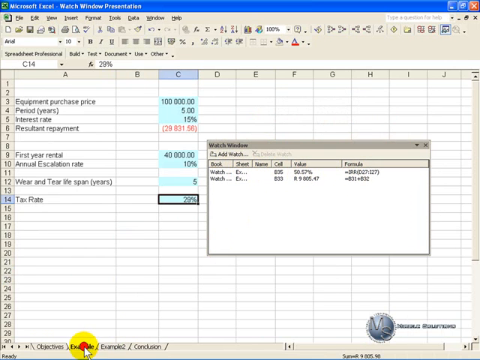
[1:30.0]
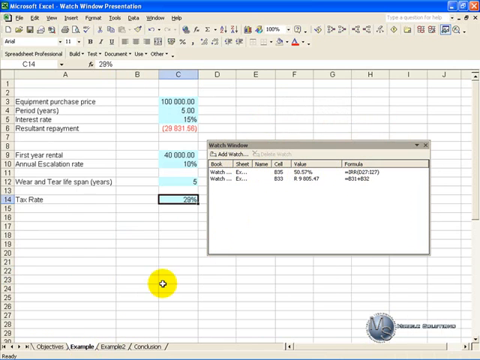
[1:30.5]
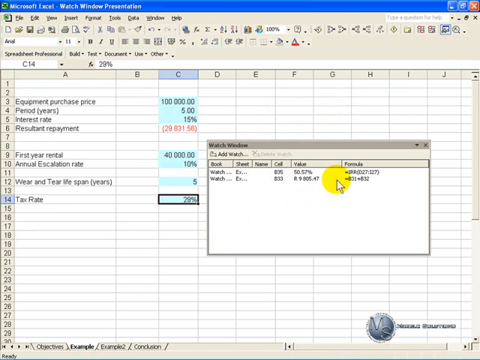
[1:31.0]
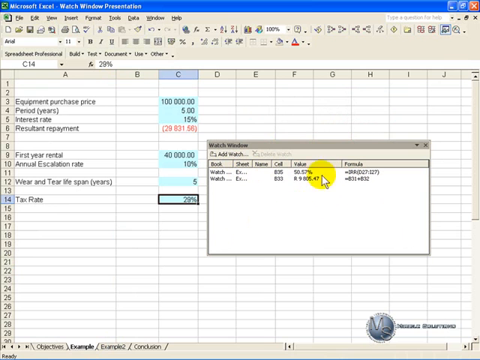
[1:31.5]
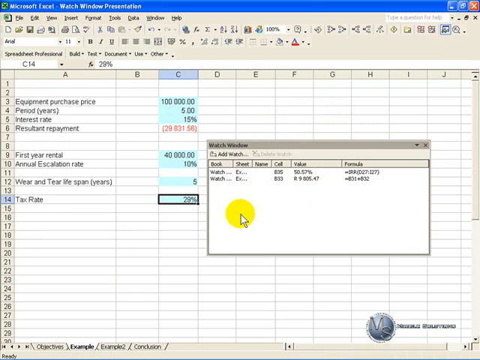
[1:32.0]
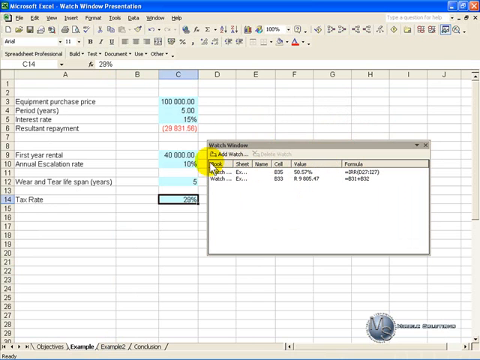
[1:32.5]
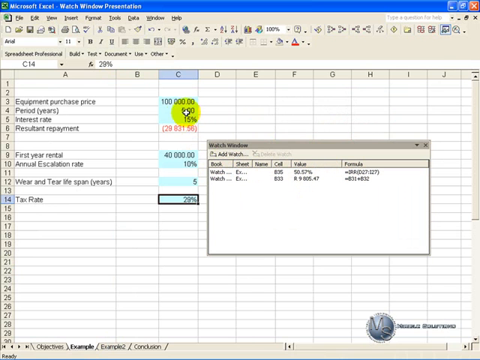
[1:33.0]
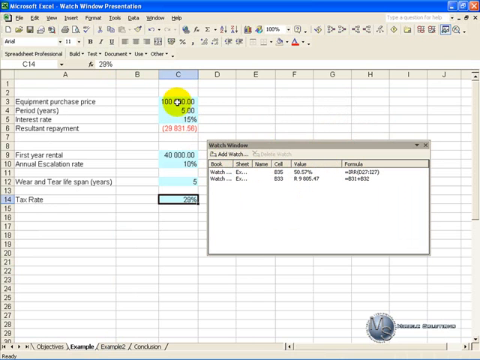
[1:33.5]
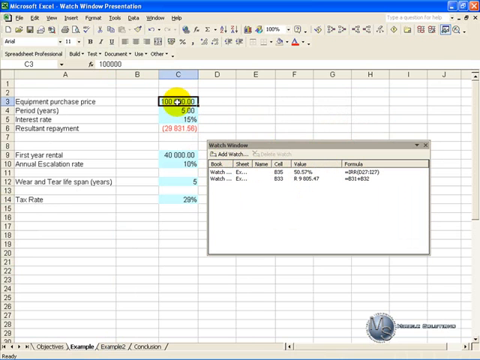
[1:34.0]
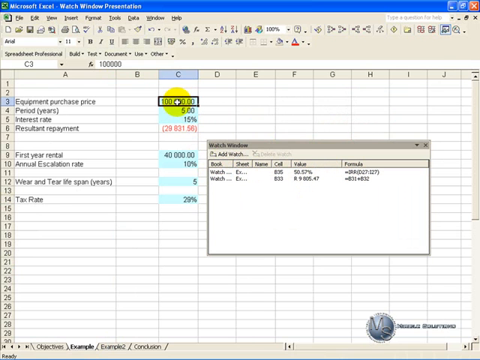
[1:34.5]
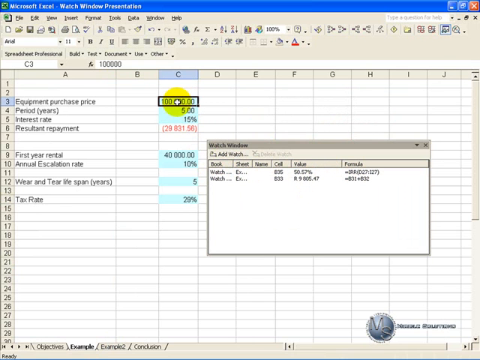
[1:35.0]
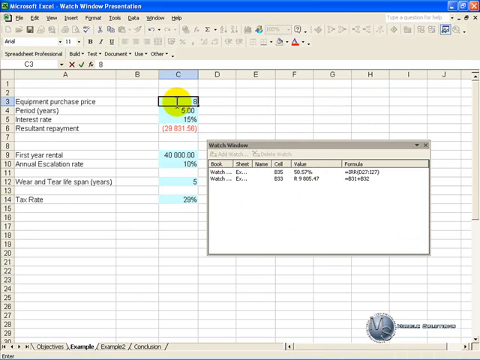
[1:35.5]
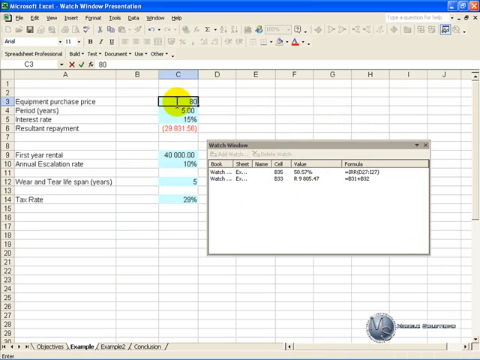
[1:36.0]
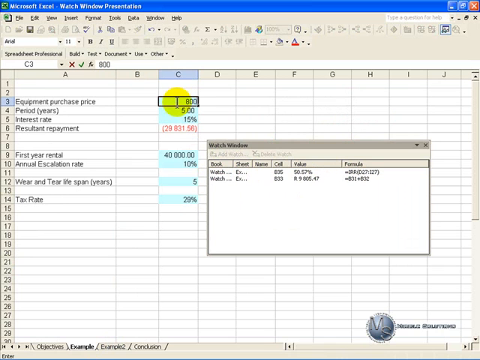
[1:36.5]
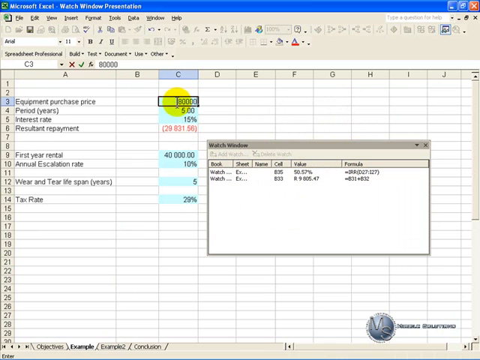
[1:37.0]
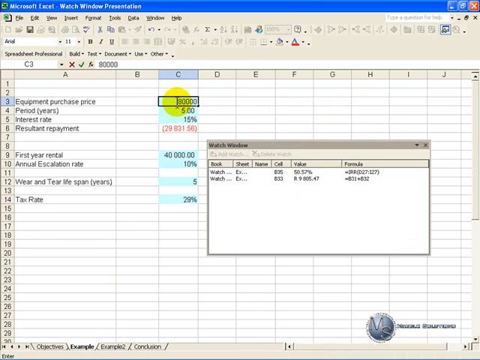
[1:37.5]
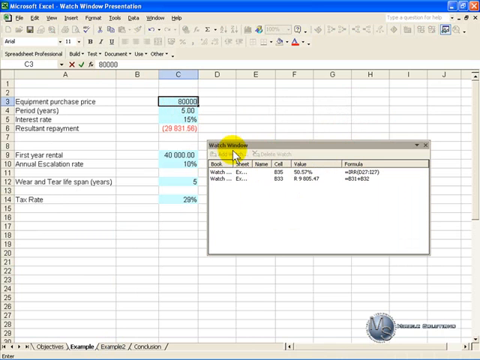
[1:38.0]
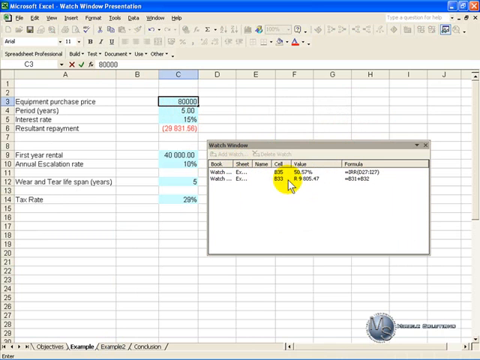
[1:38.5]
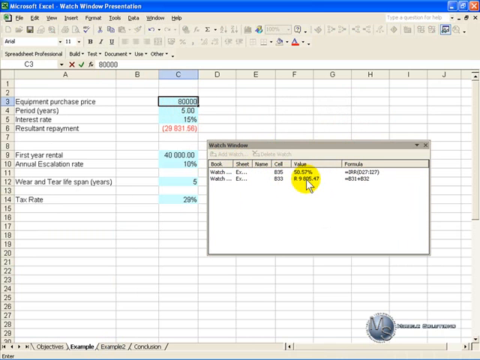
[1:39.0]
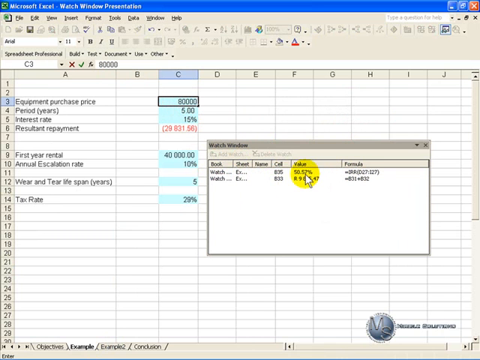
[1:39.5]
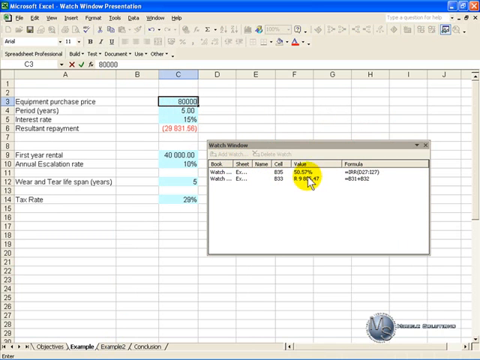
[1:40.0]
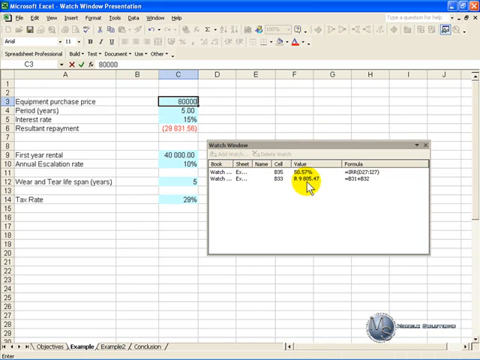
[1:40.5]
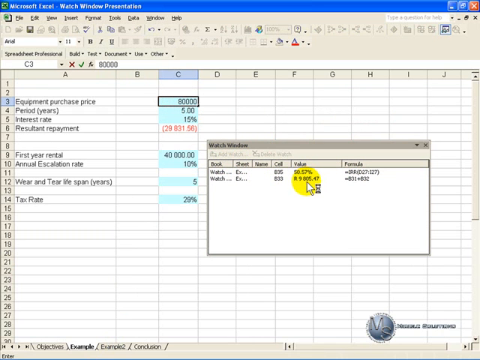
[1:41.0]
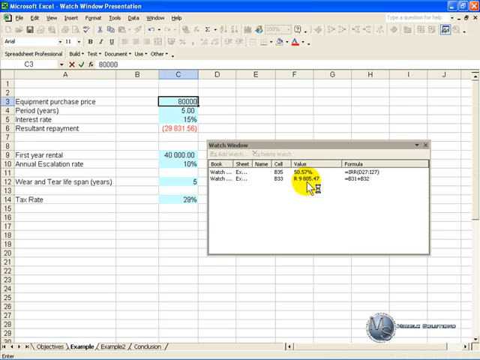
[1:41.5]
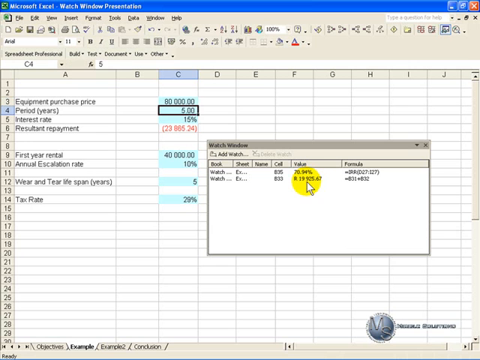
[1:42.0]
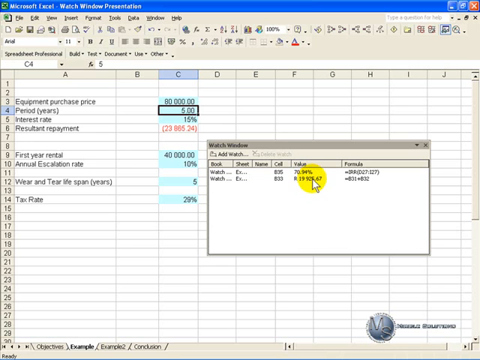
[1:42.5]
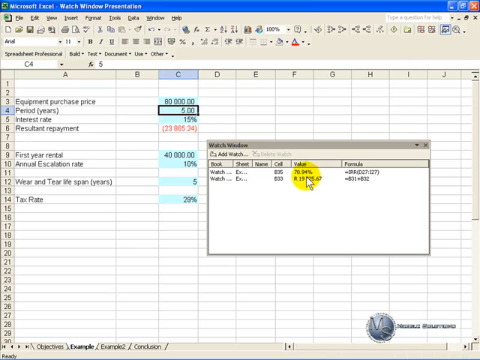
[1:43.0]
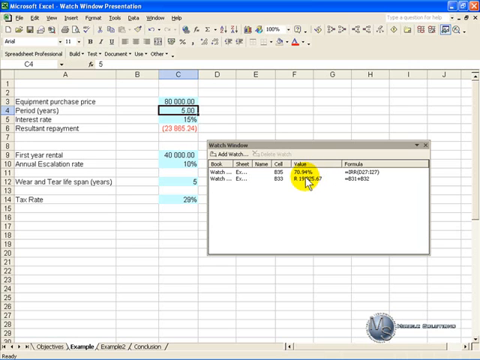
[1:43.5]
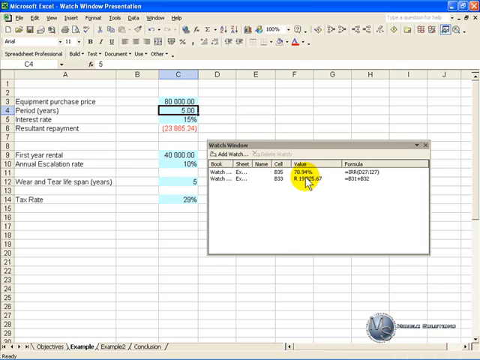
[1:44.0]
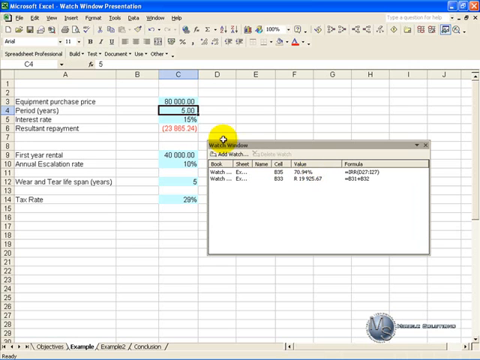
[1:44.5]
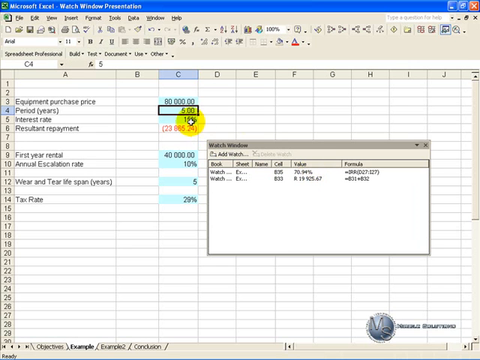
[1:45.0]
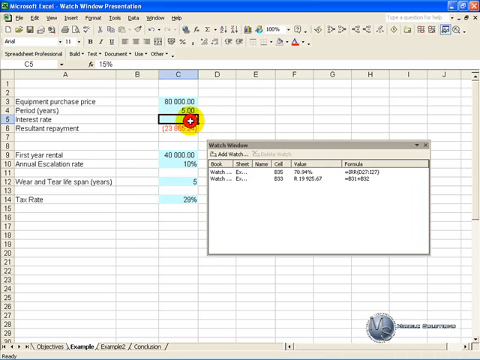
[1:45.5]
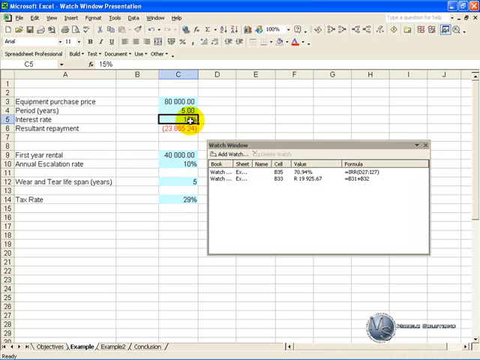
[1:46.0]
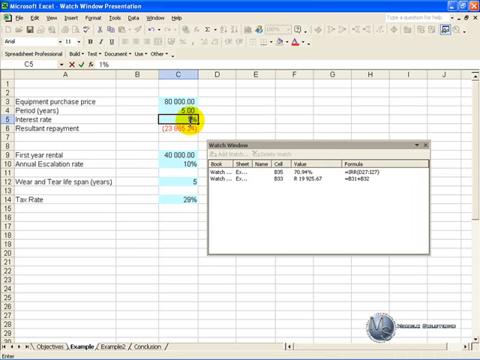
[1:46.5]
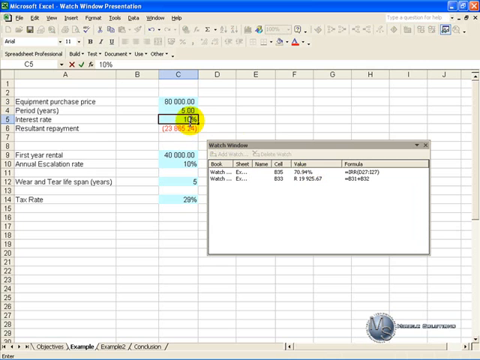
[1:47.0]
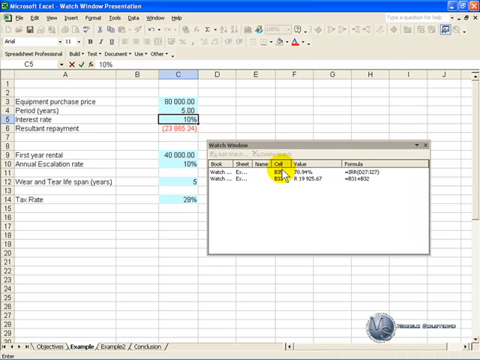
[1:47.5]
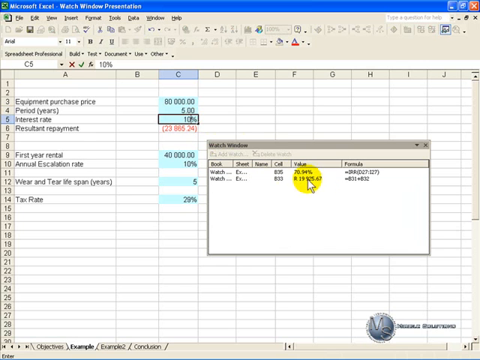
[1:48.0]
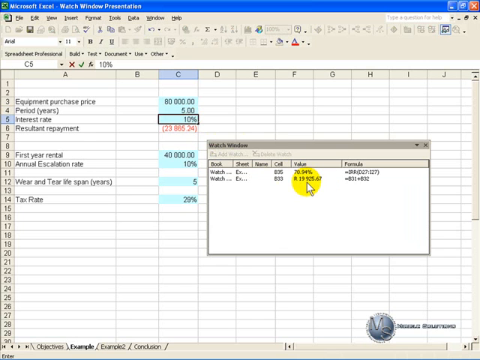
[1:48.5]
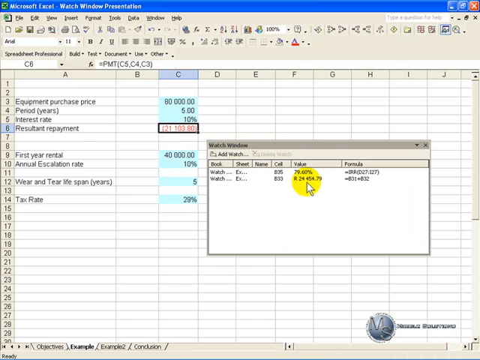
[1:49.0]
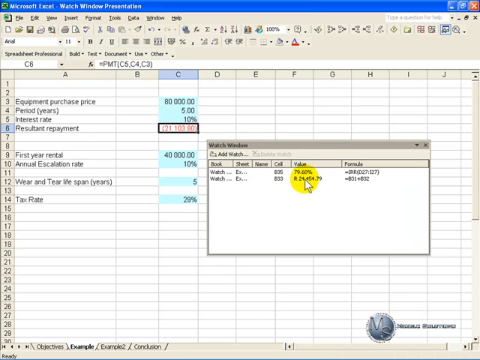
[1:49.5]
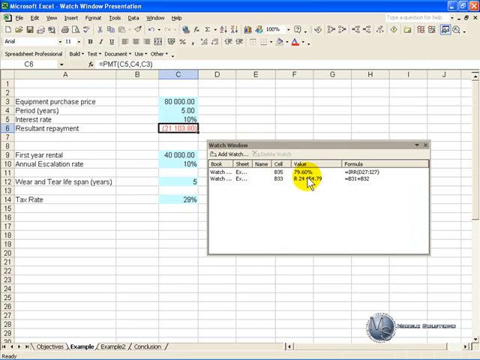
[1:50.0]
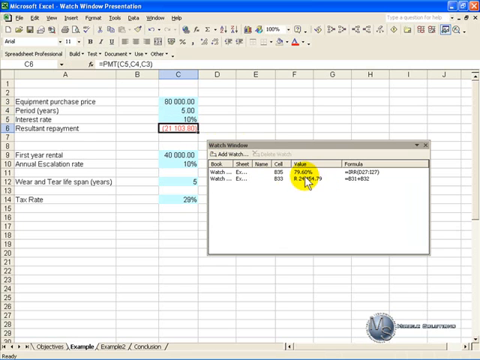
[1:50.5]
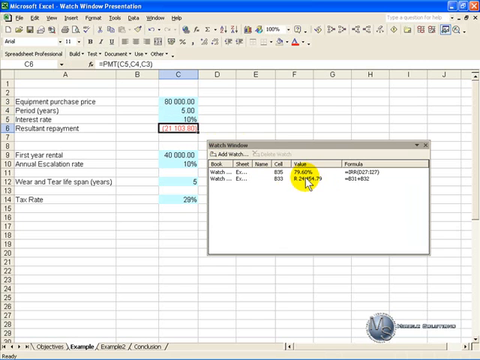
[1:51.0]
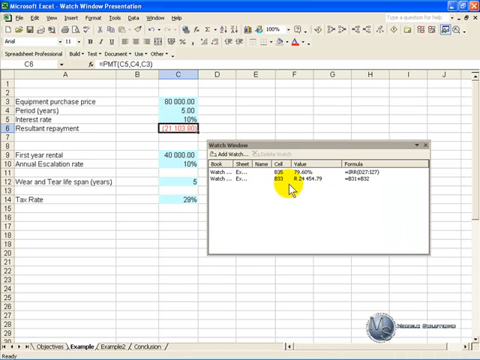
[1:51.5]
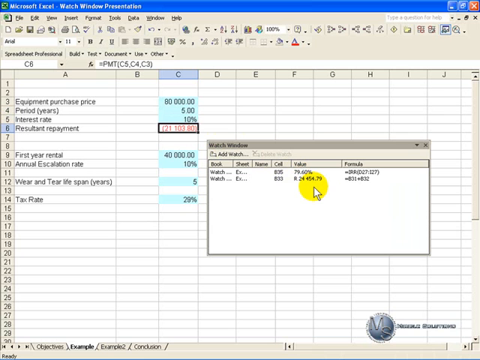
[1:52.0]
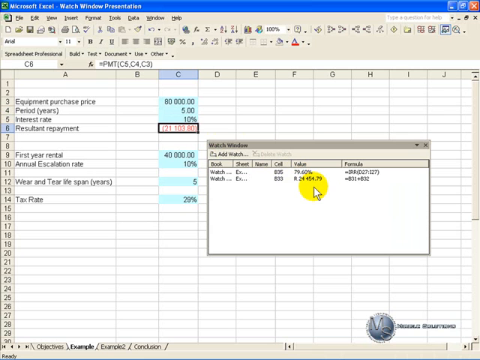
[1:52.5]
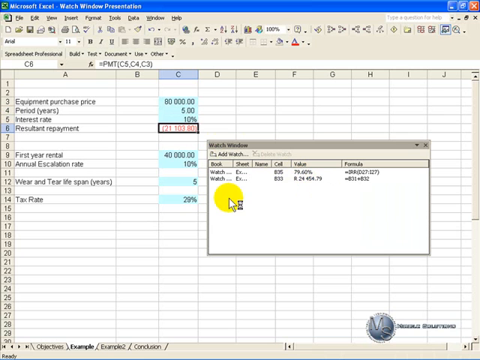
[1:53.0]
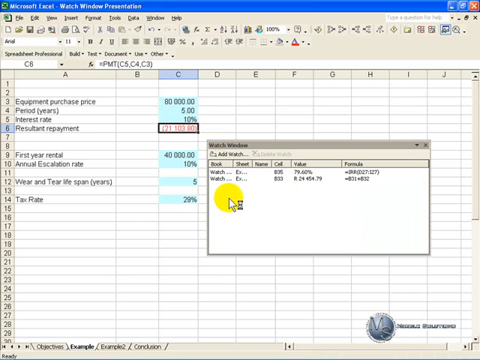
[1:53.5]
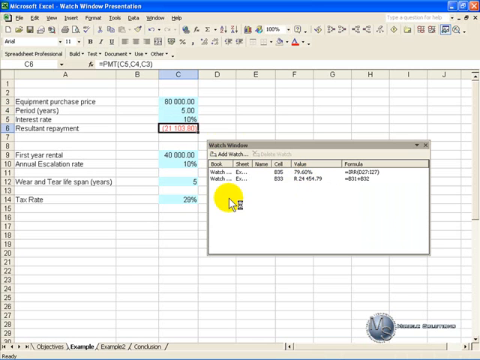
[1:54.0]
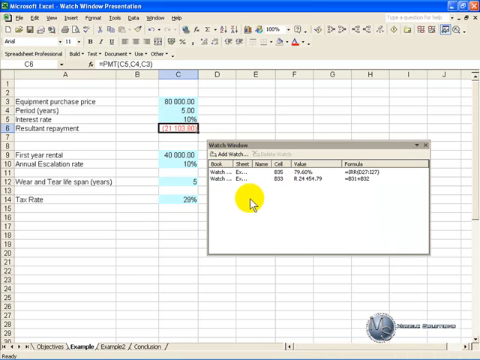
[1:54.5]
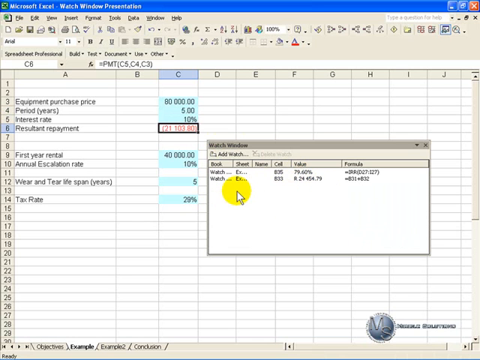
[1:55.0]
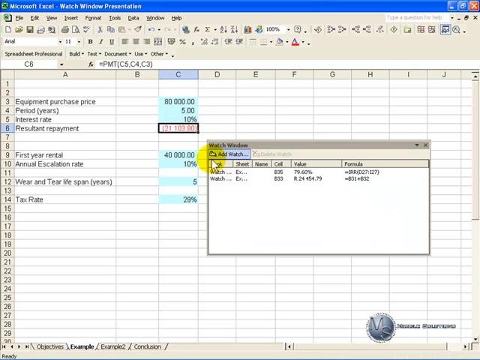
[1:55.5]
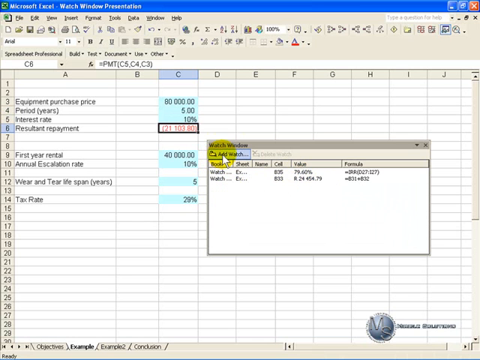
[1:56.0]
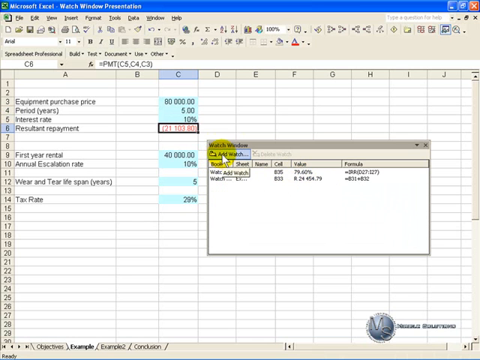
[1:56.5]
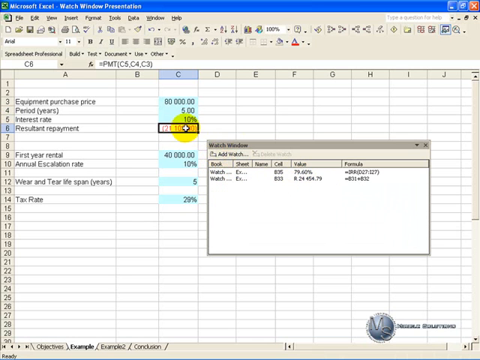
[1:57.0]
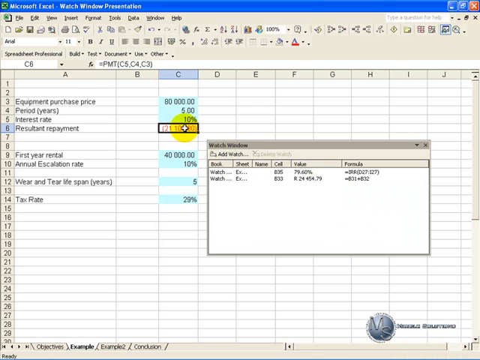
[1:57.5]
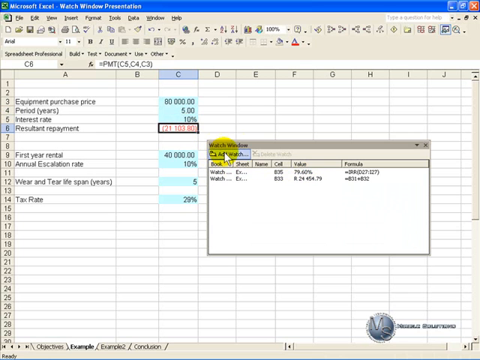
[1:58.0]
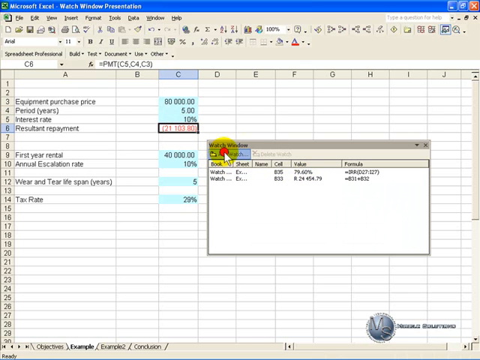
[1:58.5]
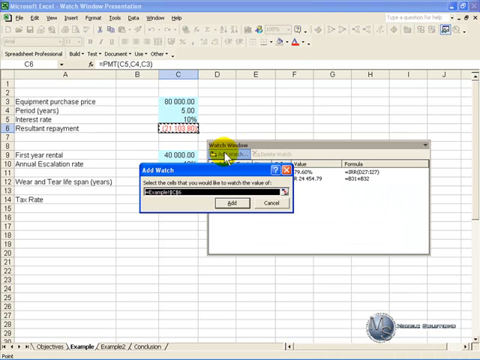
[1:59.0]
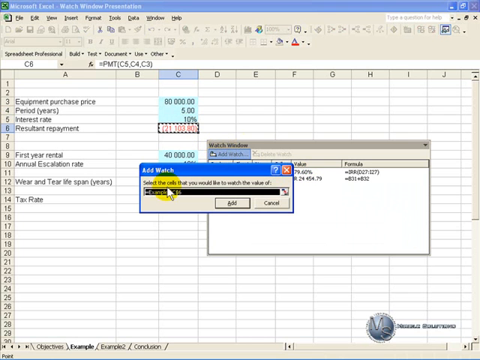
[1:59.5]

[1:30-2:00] The mouse makes circular motions over the watch window. It then goes up and clicks C3, a blue highlighted number, and the number is changed to 80,000. The mouse hovers over the values of the two cells already in the watch window. An hourglass pops up near the mouse and values in the cells change, including C3. C4 is hovered over. The mouse then clicks C5 and enters 10% in that cell, after which numbers change in C6 and that value is now red. The mouse continues to move around, then clicks add watch again, and the add watch window pops up in the middle of the screen.